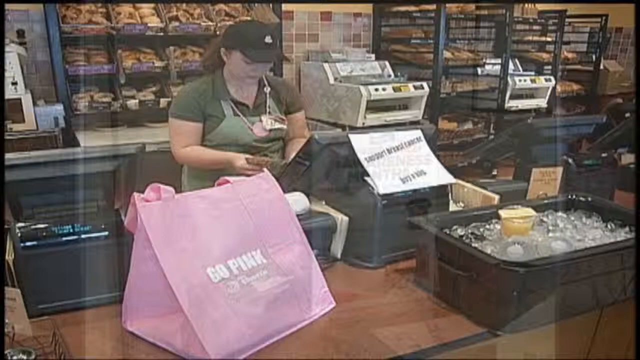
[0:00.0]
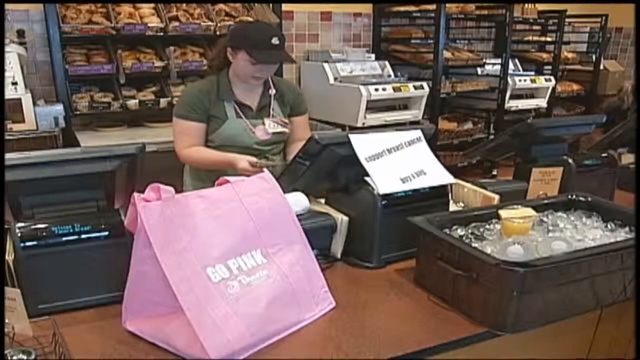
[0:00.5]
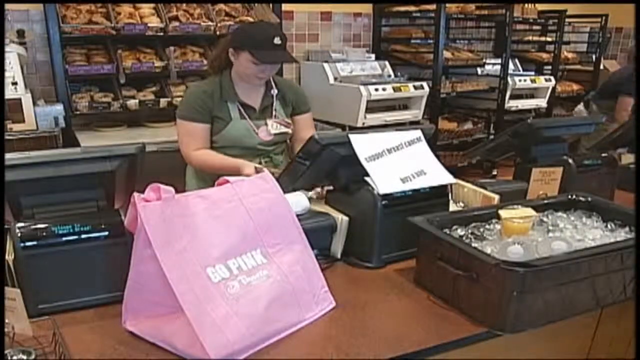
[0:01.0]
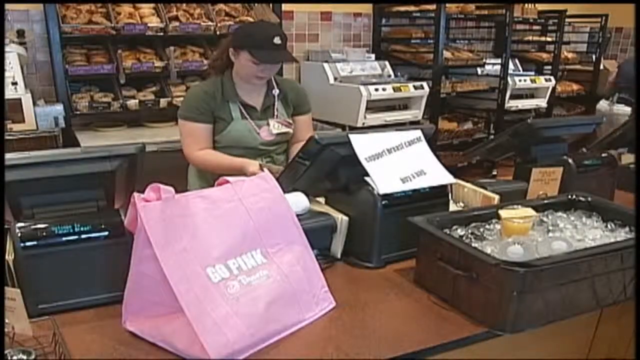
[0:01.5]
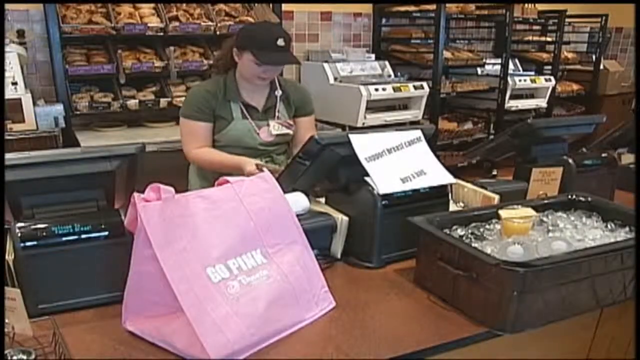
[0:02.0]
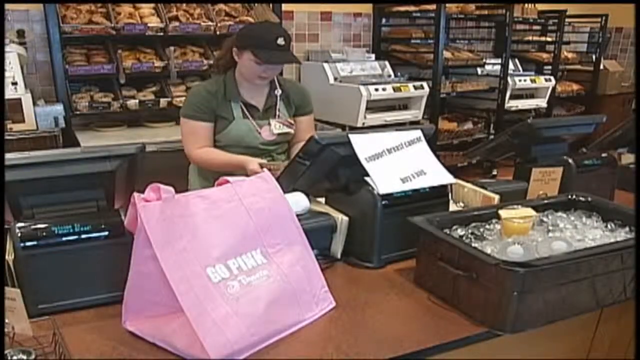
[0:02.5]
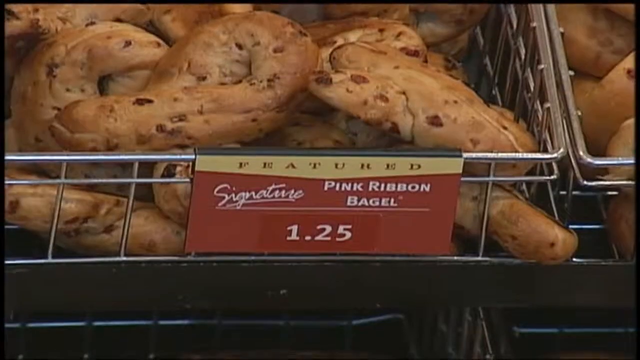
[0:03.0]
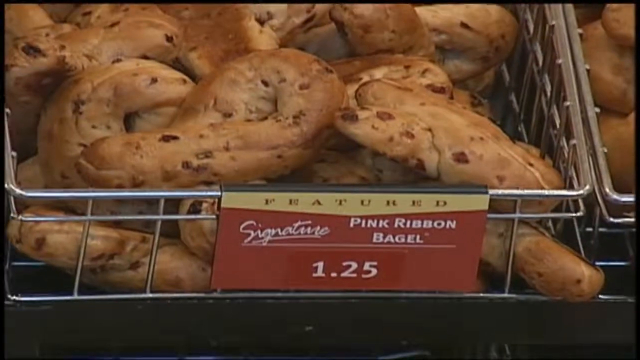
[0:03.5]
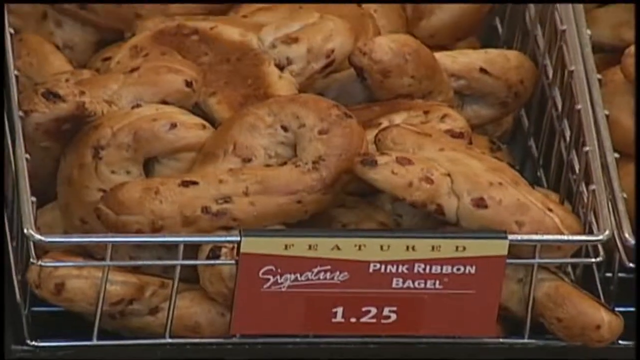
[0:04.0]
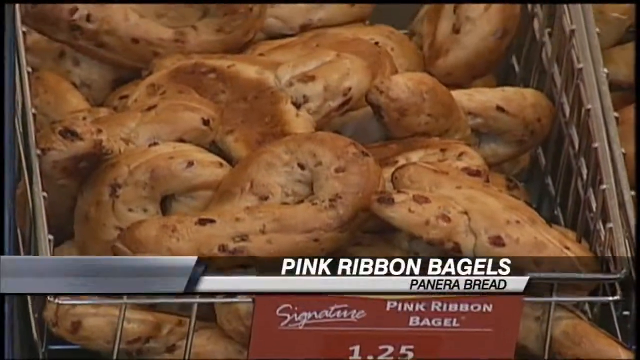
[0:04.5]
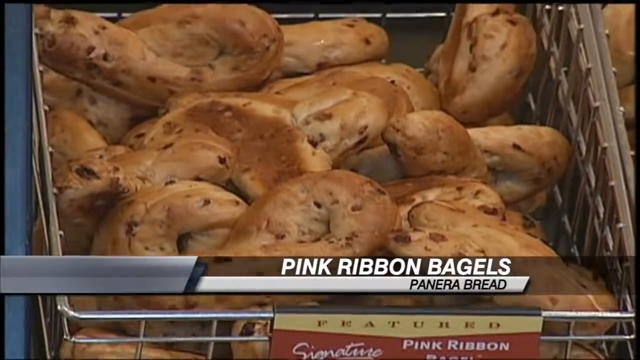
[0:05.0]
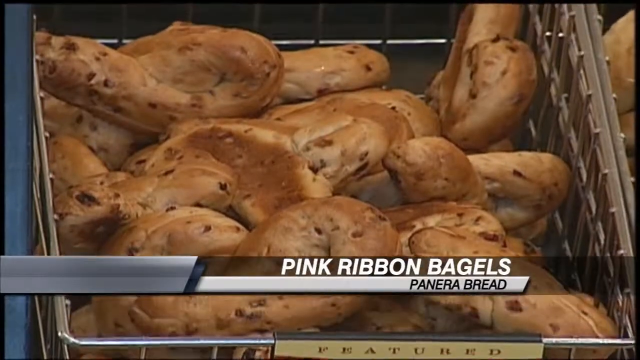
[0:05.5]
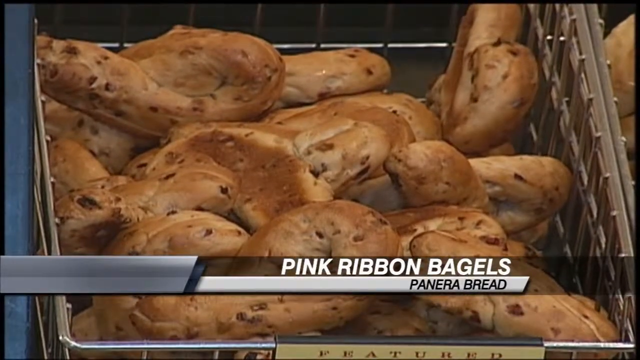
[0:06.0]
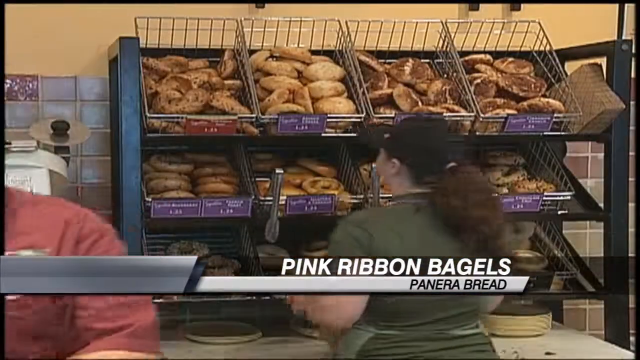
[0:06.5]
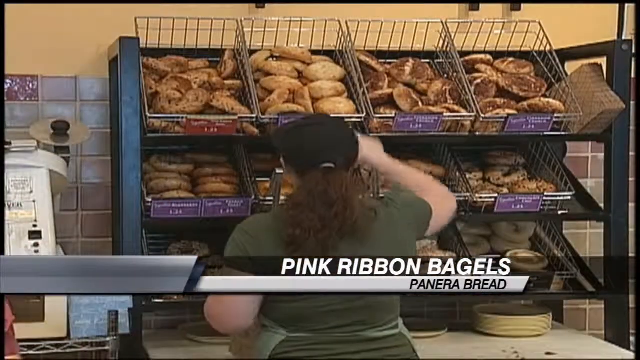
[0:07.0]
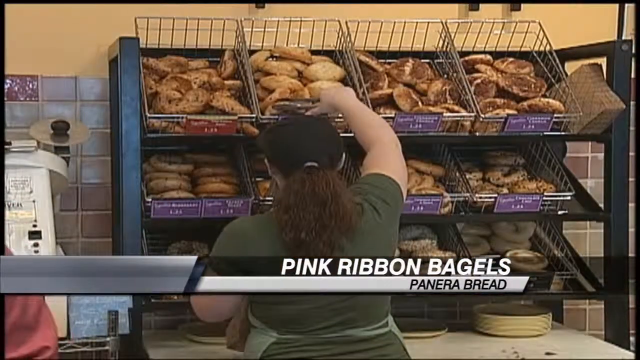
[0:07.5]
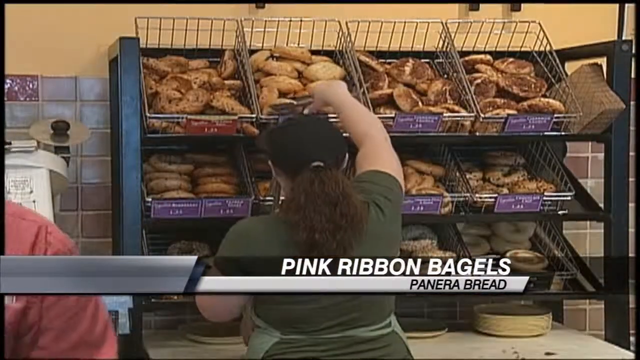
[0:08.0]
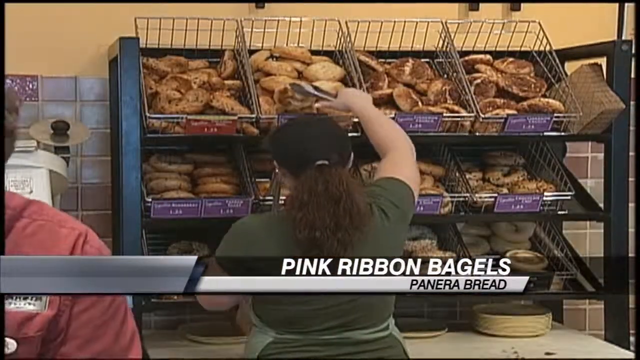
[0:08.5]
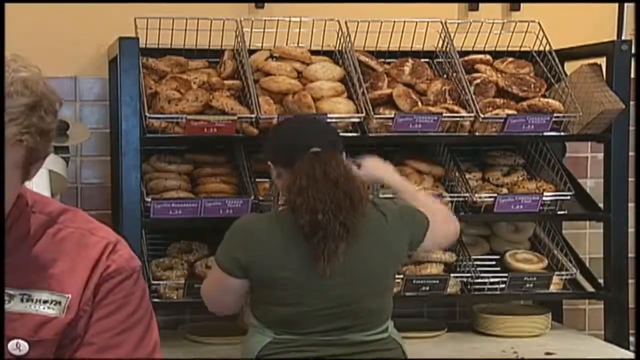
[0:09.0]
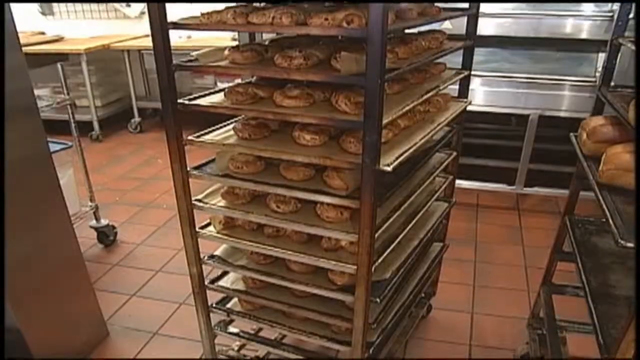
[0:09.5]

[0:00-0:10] An employee dressed in the company's outfit wears a black cap, an olive short-sleeve t-shirt and a light green apron. In front of her are two pink bags with the text "Go Pink" written in white. The video transitions to a zooming image of a pink ribbon bagel, sold for $1.25, with "Pink ribbon bagel" written in white on a red background. The bagel is light brown, and it is shown to be made by Panera Bread. The employee grabs a bagel with a pincher, reaching for it from the topmost shelf and placing it.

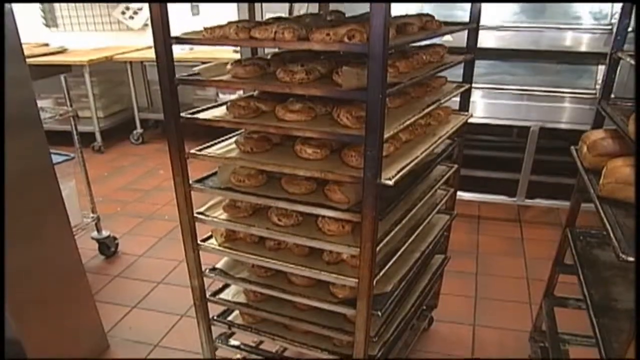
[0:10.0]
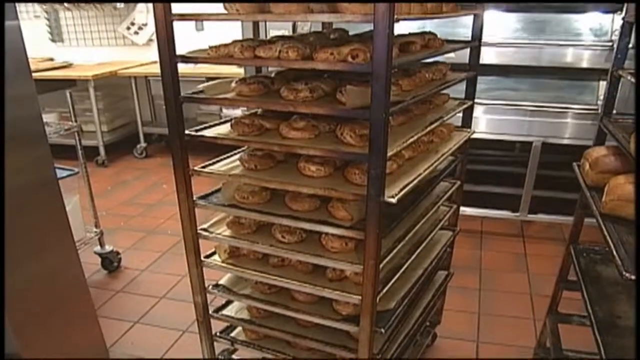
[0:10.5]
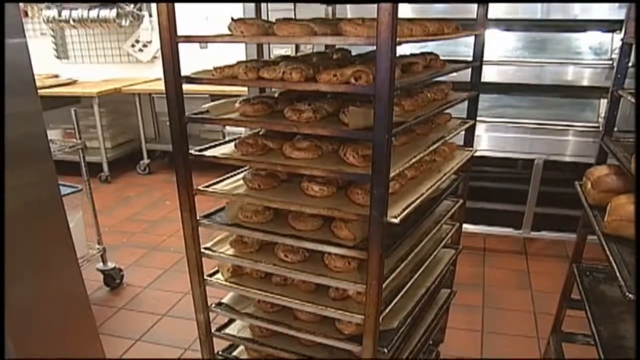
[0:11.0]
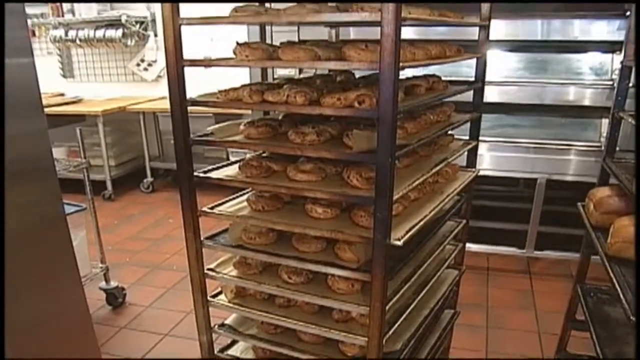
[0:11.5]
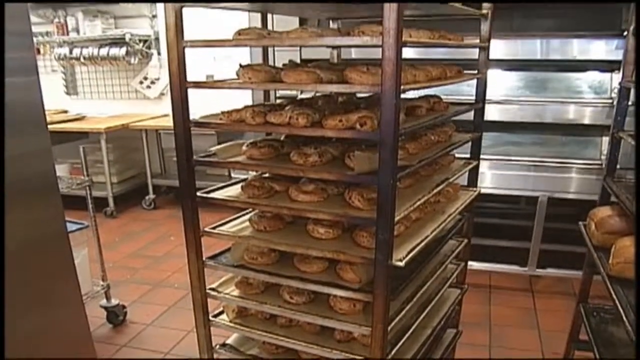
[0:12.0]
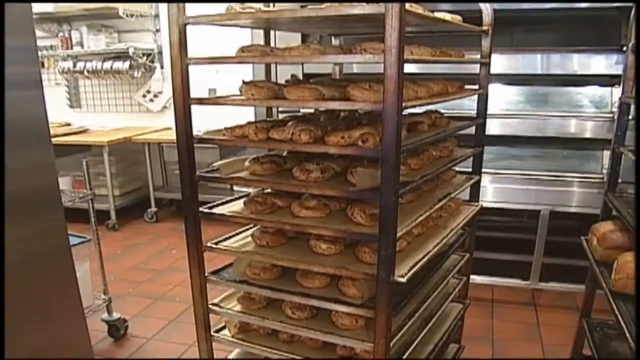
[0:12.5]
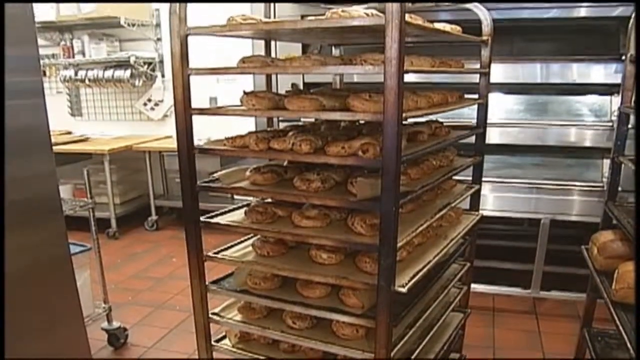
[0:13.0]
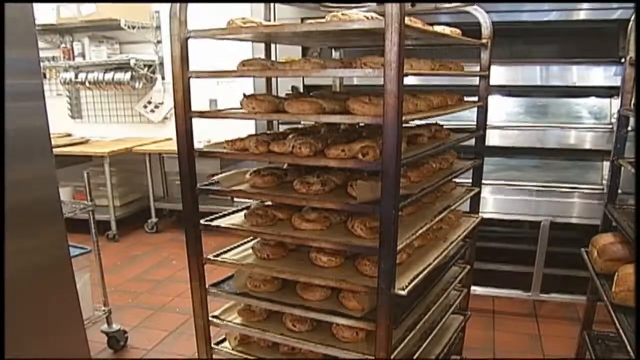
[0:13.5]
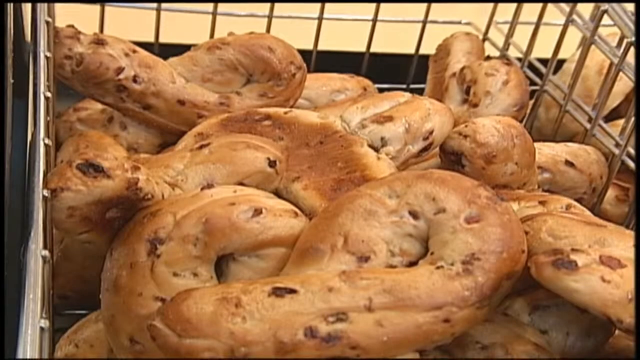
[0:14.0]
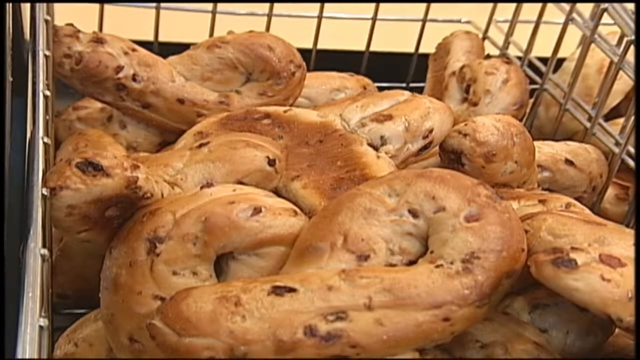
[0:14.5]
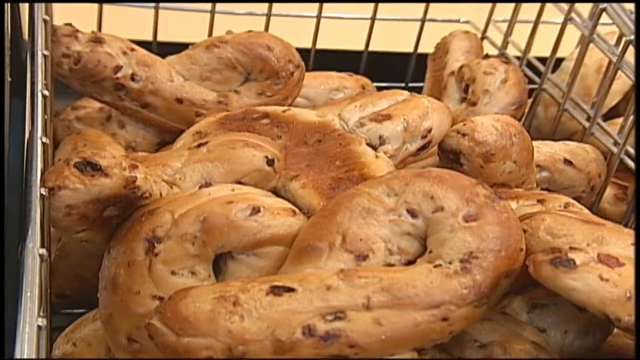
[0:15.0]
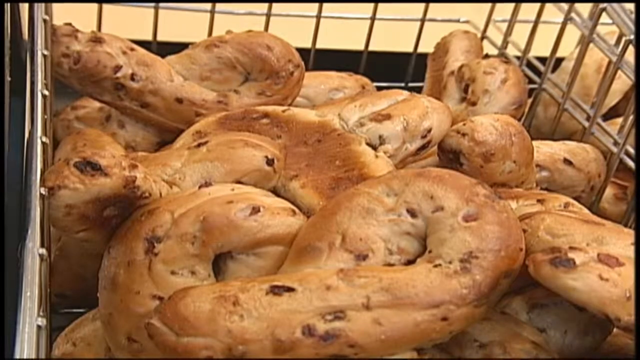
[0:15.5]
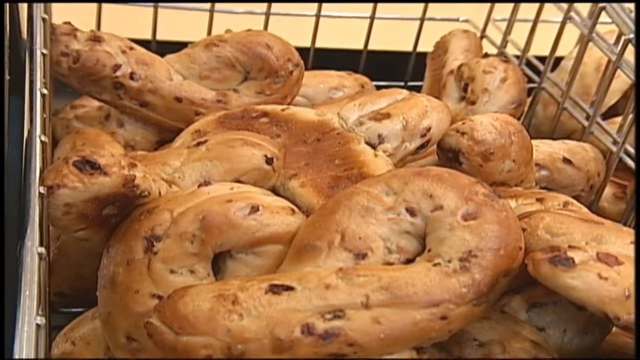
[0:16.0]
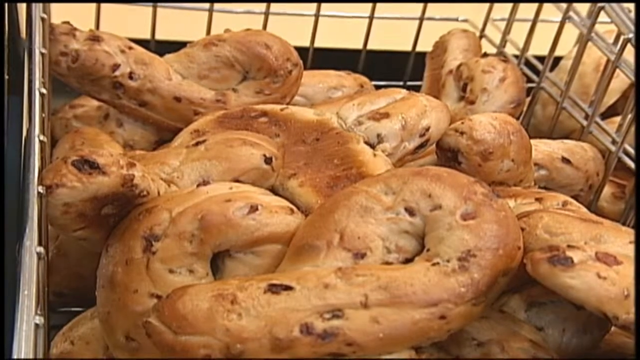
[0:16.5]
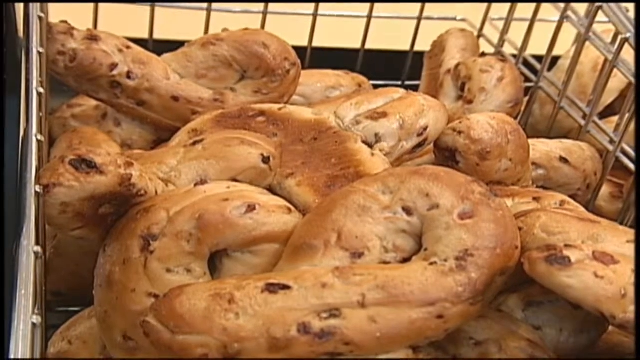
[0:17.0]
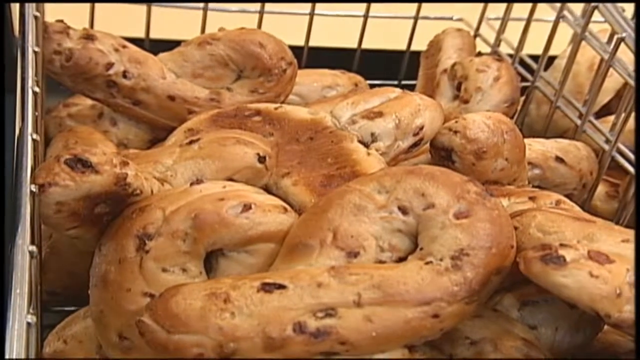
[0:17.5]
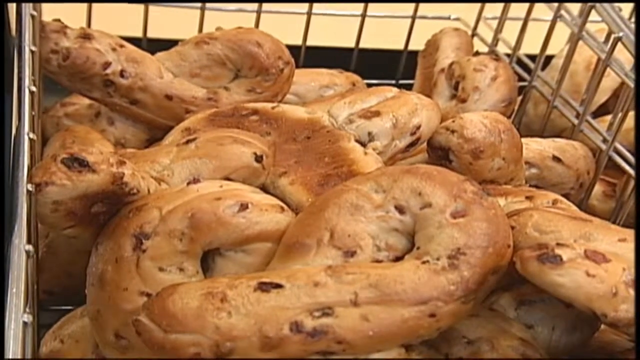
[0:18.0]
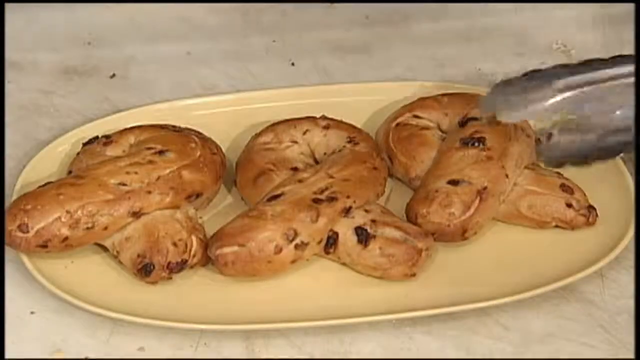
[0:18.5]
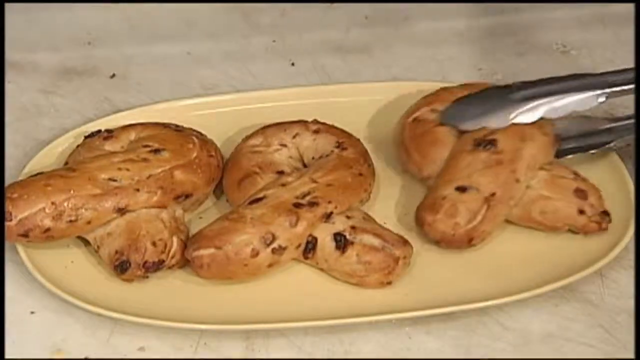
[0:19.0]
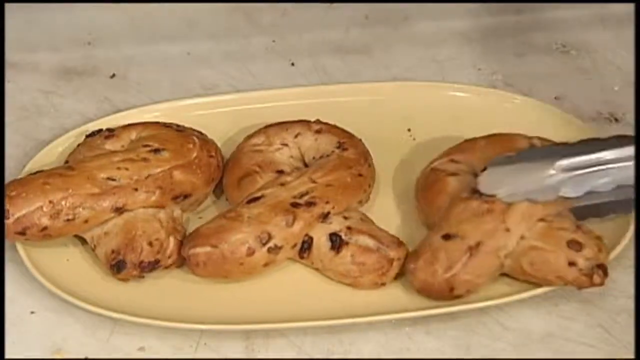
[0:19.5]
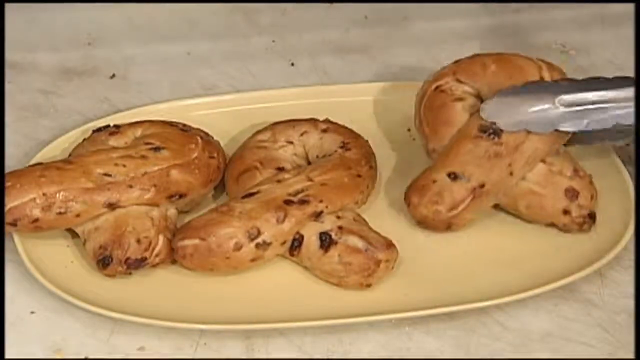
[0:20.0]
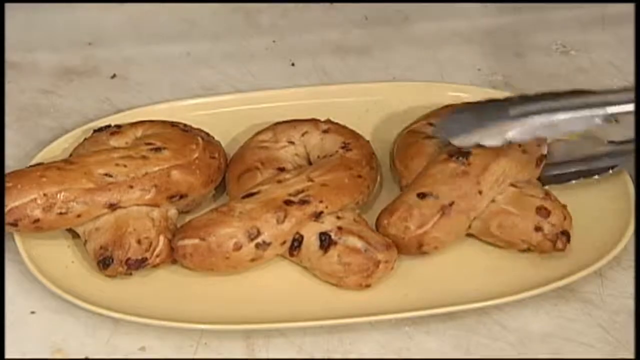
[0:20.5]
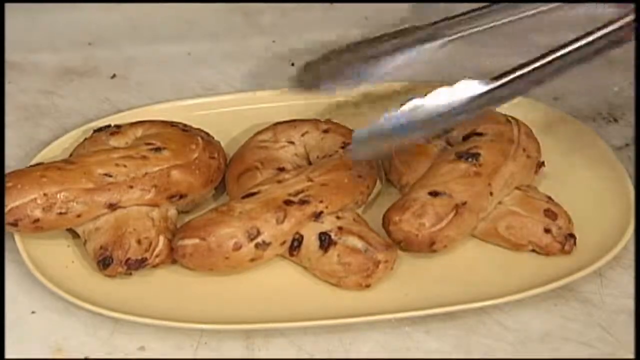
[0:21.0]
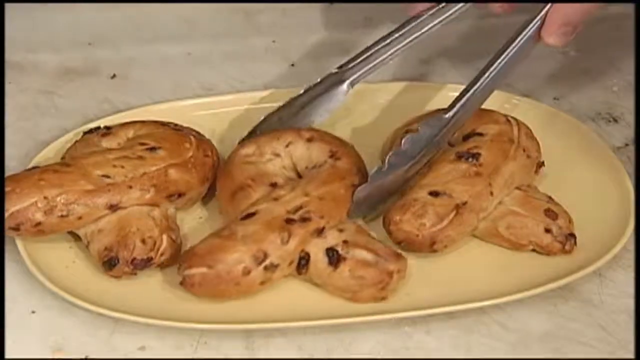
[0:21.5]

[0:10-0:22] A shelf filled with lots of bread is visible. The video continues in the kitchen area, where the floor is tiled and brown and a stainless steel shelf is filled with bagels. The video transitions to a zooming image of bagels inside a metallic basket. Three bagels are placed on a cream plate on a white slab, and a stainless steel pincher clamps one of the bagels, briefly lifts it and places it back on the plate. The bagels are shaped in a ribbon style and are brown.